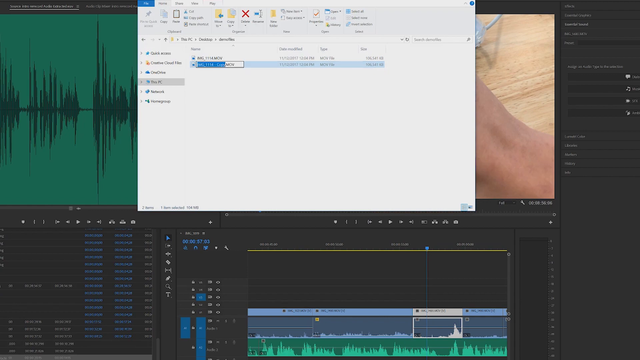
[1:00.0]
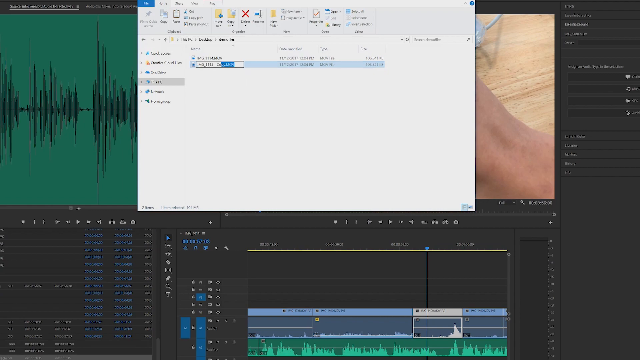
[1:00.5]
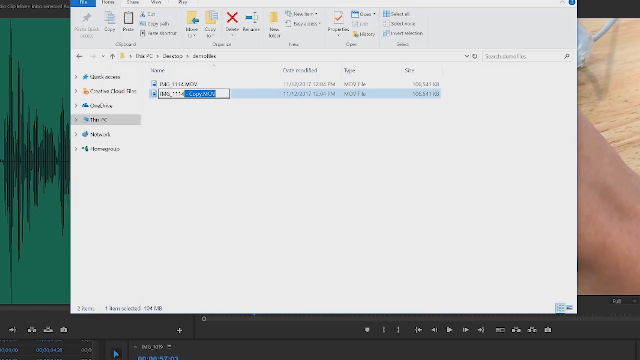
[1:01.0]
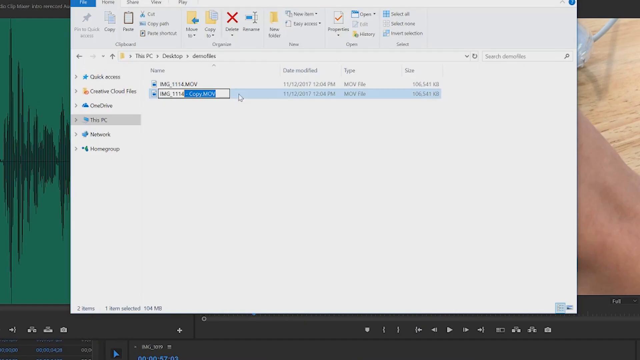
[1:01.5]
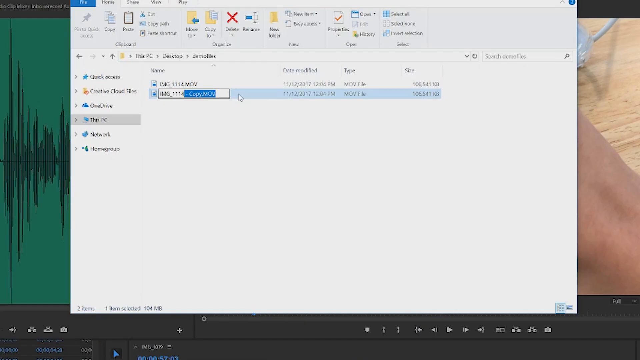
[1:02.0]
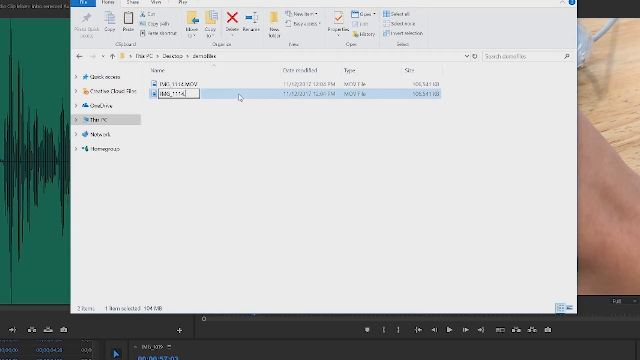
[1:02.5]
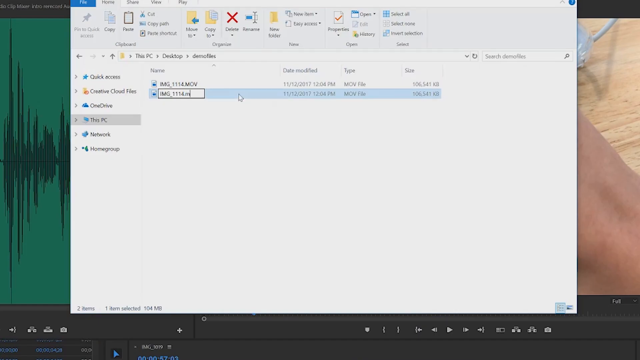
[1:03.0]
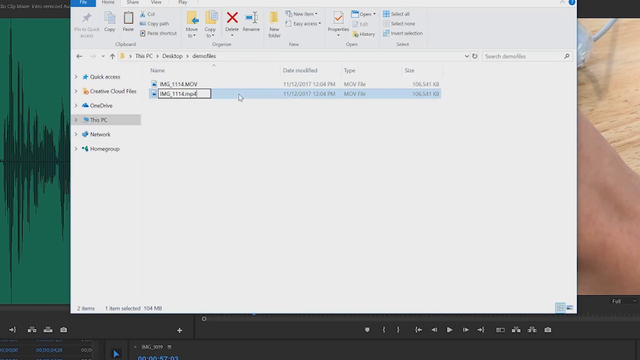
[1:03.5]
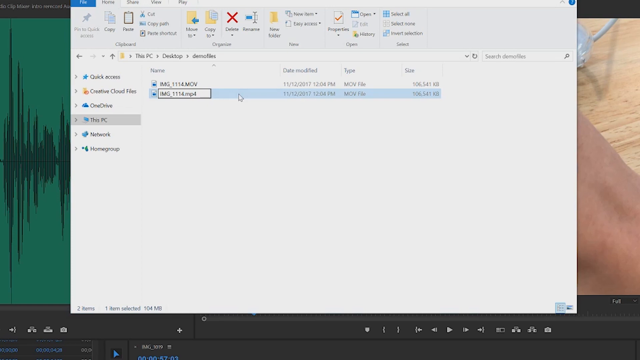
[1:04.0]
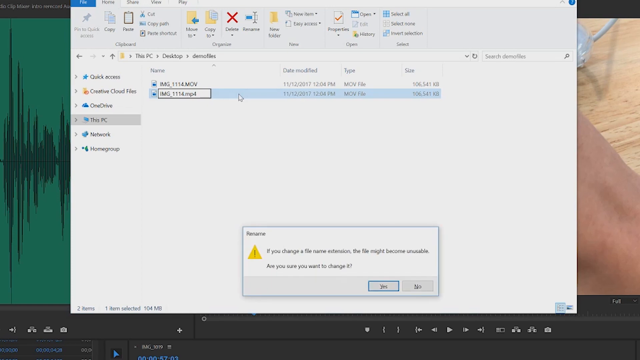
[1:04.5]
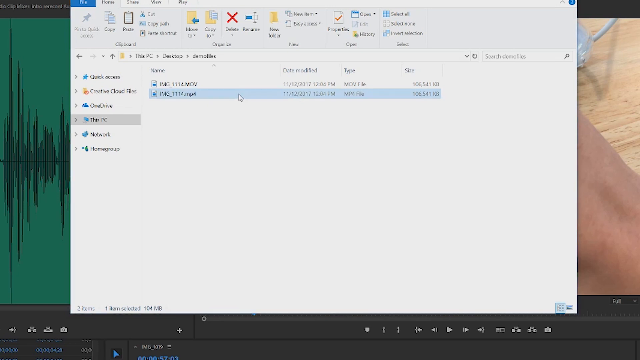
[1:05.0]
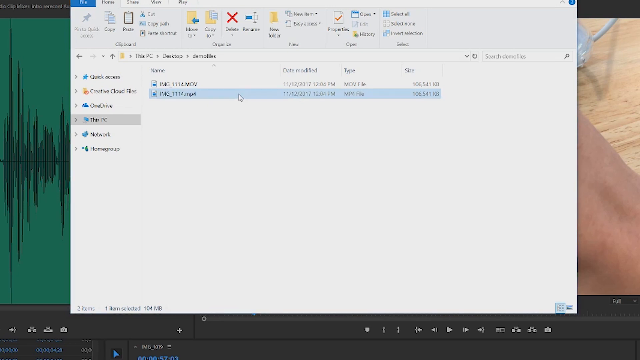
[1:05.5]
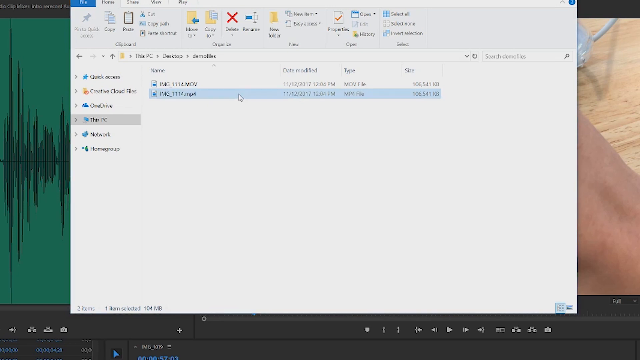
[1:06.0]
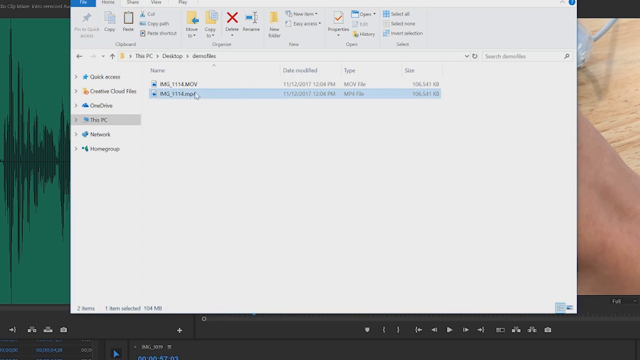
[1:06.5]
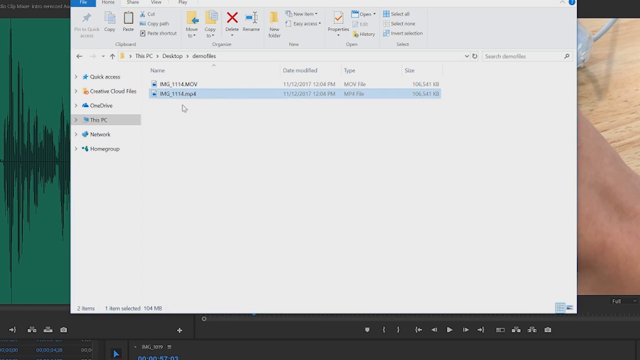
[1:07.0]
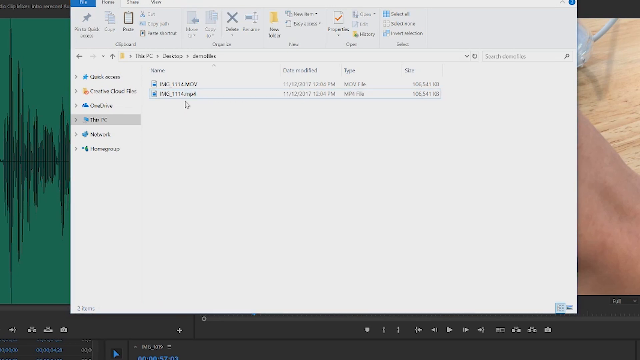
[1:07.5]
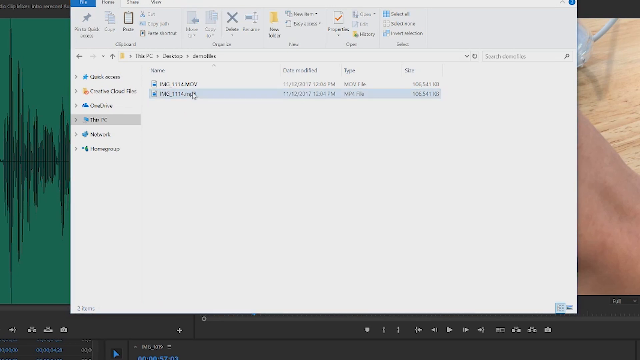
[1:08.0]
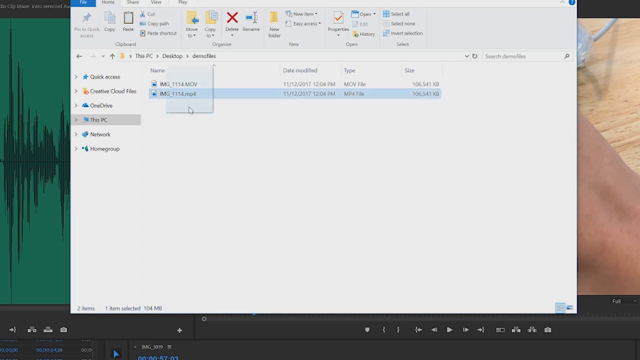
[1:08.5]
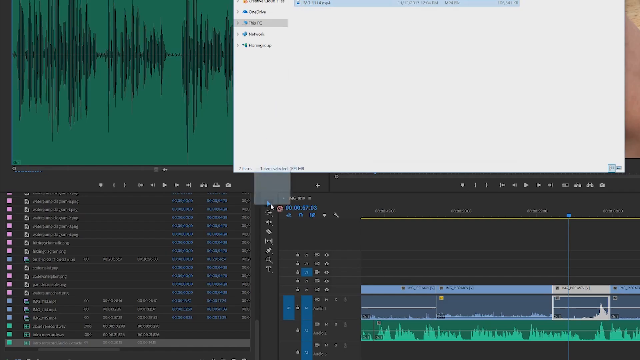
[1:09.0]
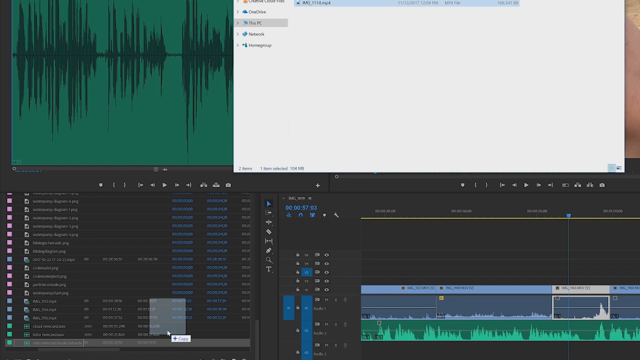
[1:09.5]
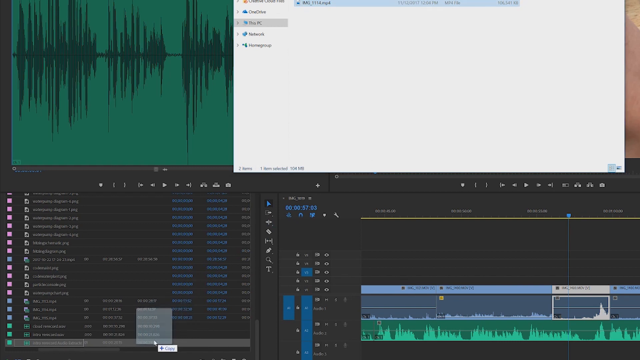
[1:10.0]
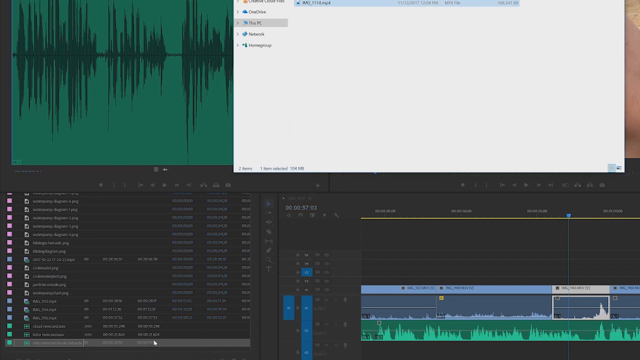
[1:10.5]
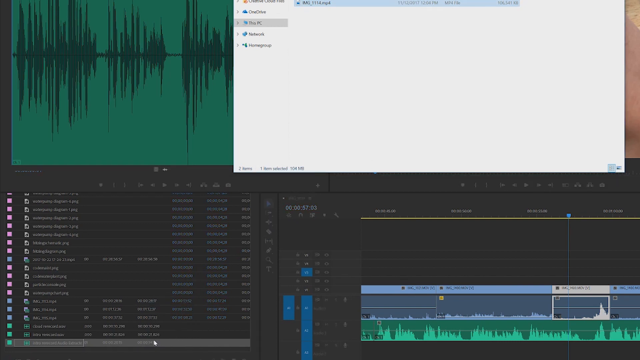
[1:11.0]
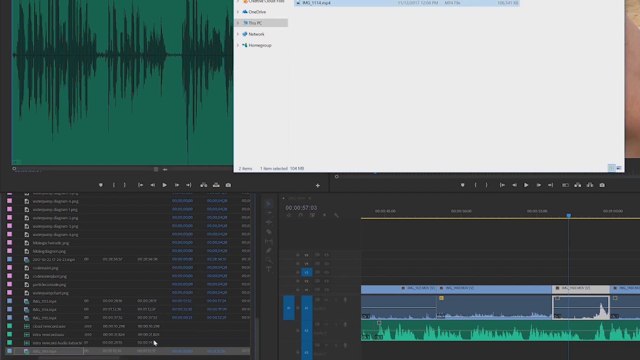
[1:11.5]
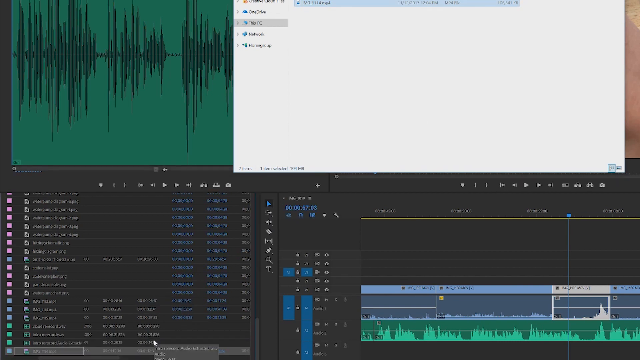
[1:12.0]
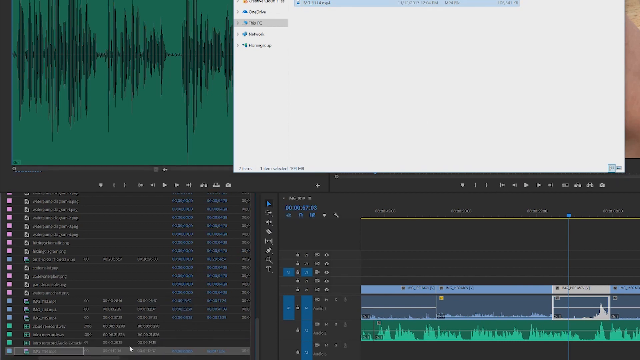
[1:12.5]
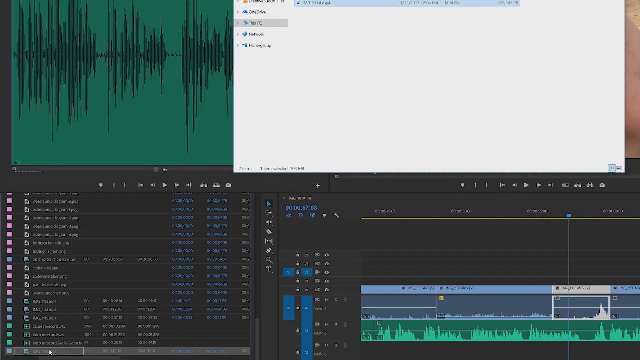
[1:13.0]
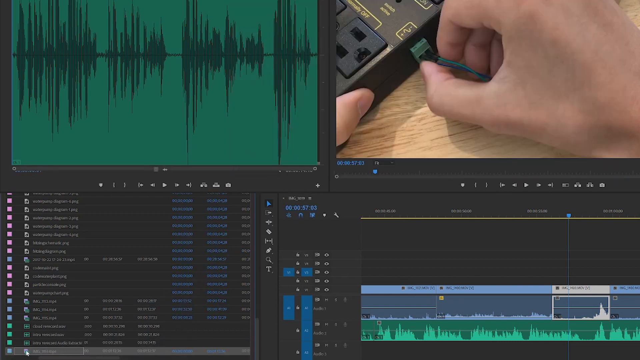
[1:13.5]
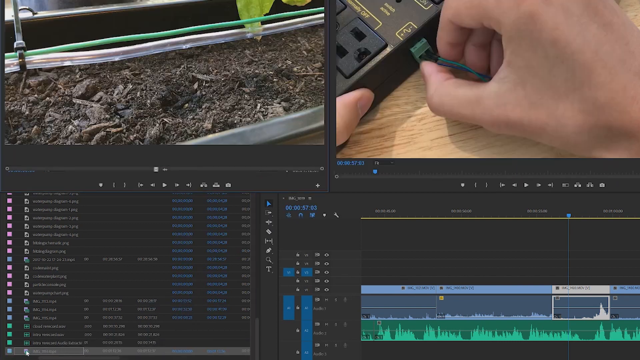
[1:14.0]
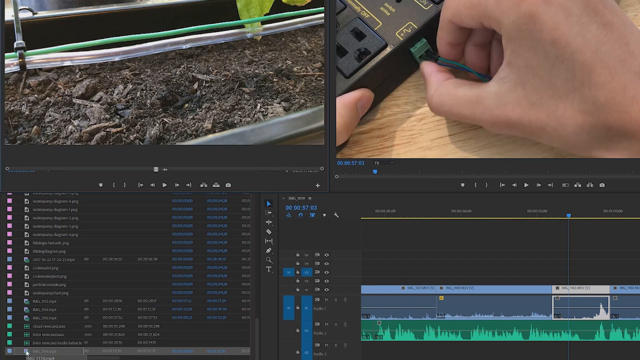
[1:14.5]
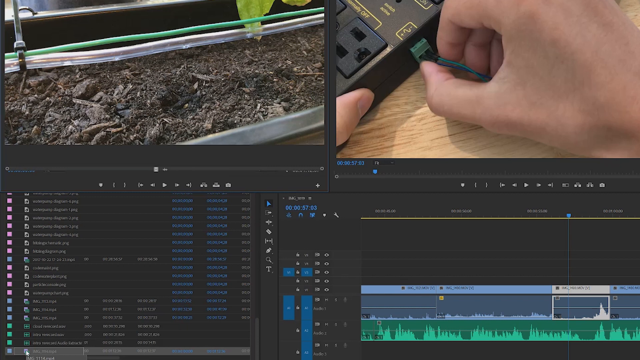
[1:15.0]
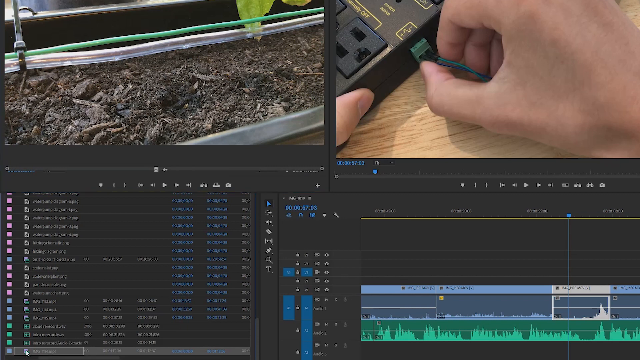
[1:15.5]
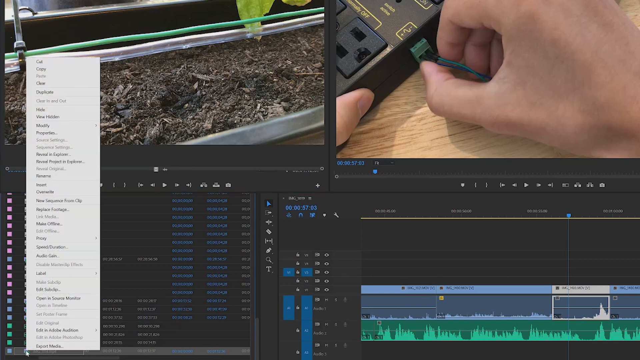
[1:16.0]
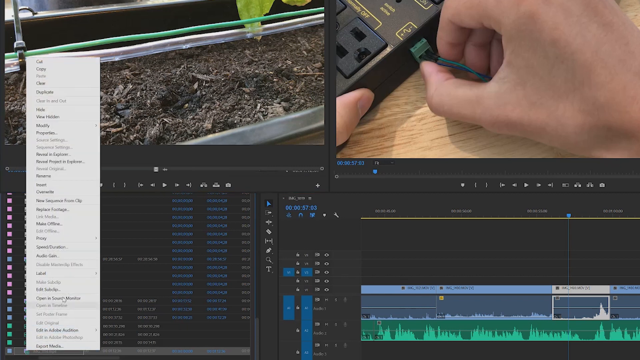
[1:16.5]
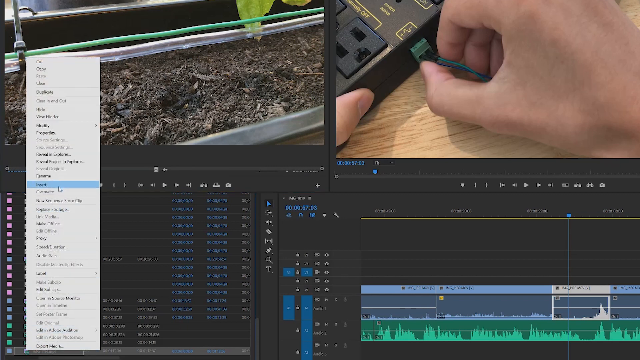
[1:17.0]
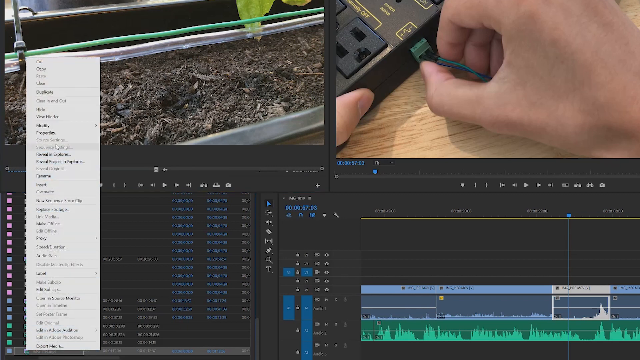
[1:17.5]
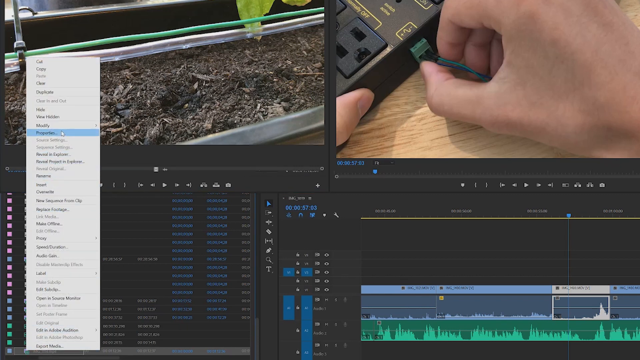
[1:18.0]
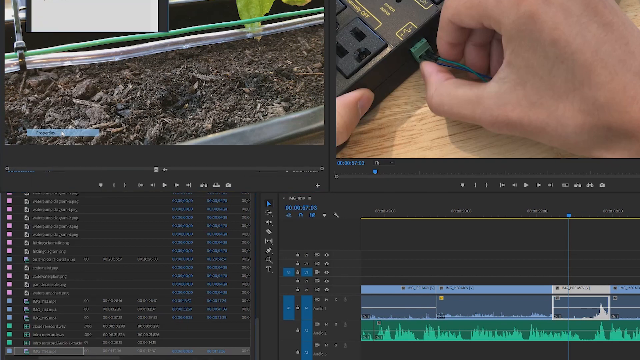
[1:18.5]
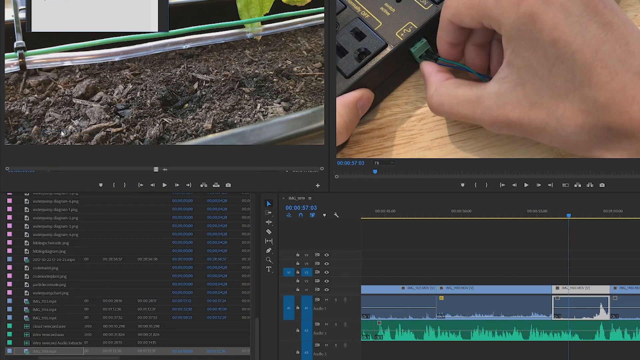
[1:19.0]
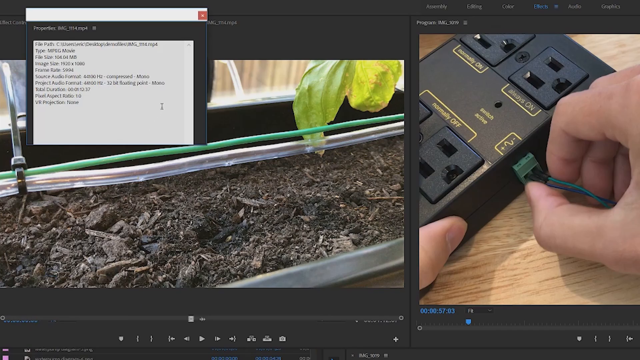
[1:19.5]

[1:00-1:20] The person controlling the cursor highlights something, deletes it and pastes something else. There is what looks like green soil and a yellow leaf. The background still shows a white man's hand holding the green cable, trying to fix it into the box, which has four spaces with three fixable holes. A red cross appears on the screen. The person copies, highlights and deletes, and in its place puts "114 mps", then moves that data straight down to the left-hand side of the screen. The cursor clicks on the icon below "modify", and then "date modified", "type", "size", "quick access", "creative cloud files" and "this PC" appear, with "this PC" highlighted. The cursor moves to "properties" and clicks on it, and the view returns to the first screen, where something was highlighted and deleted and another thing was pasted.